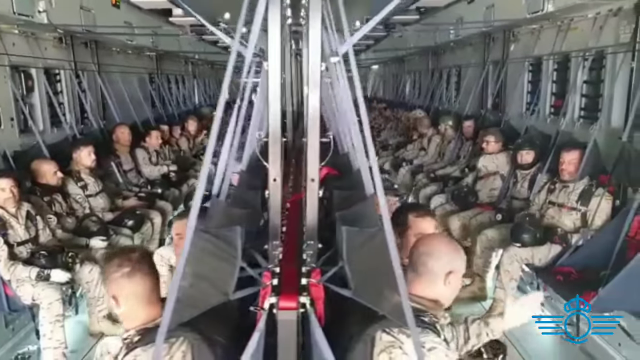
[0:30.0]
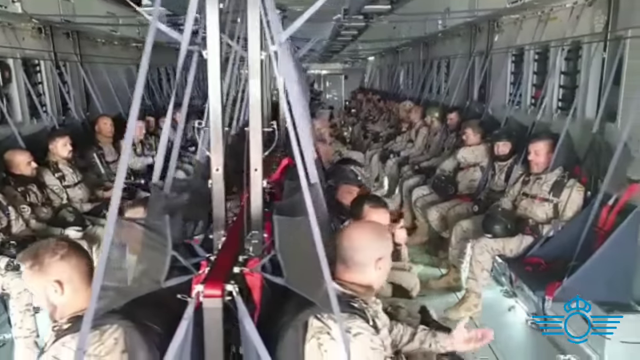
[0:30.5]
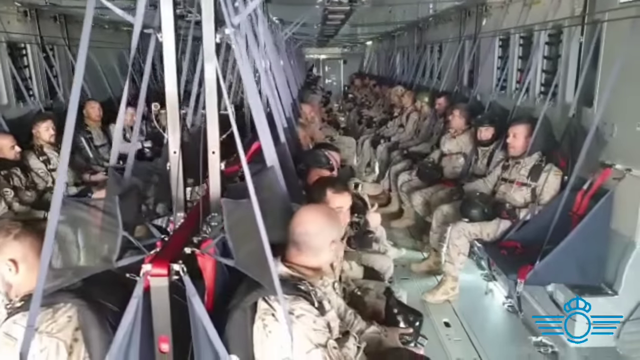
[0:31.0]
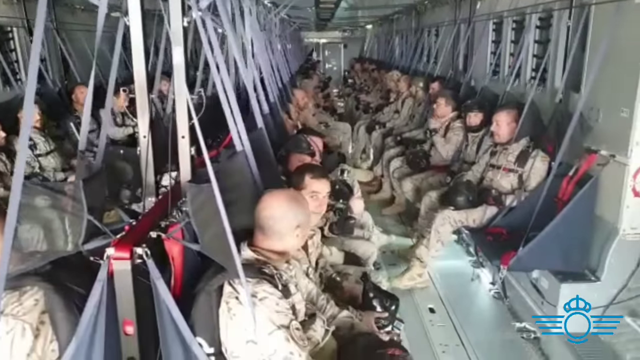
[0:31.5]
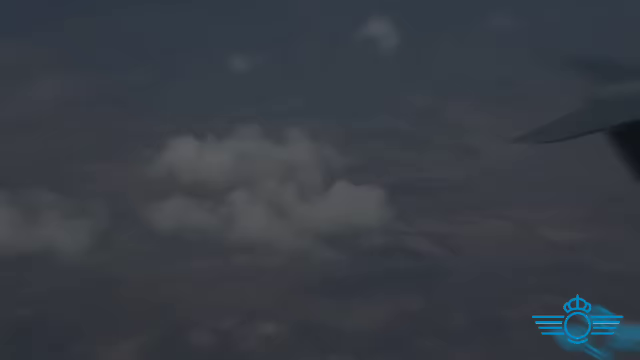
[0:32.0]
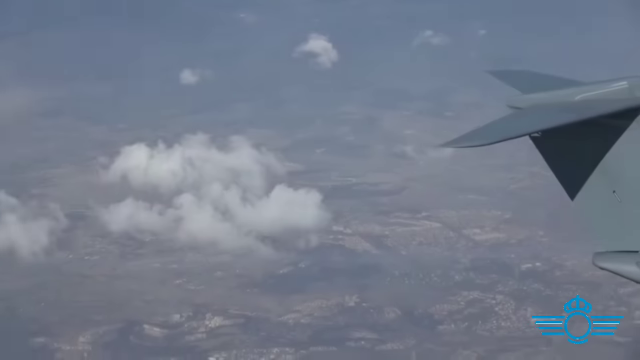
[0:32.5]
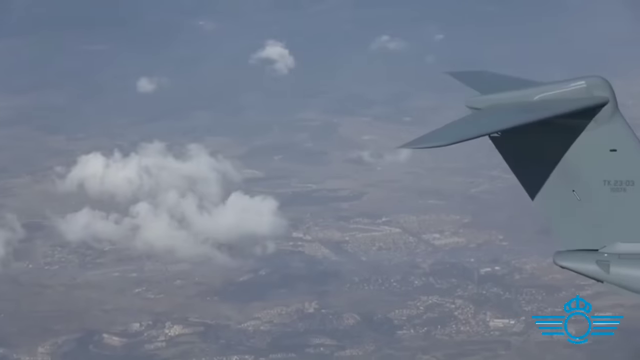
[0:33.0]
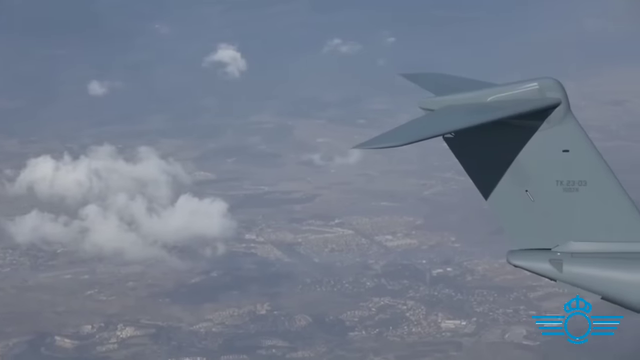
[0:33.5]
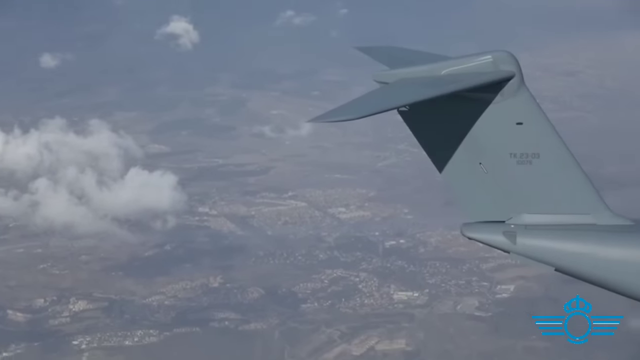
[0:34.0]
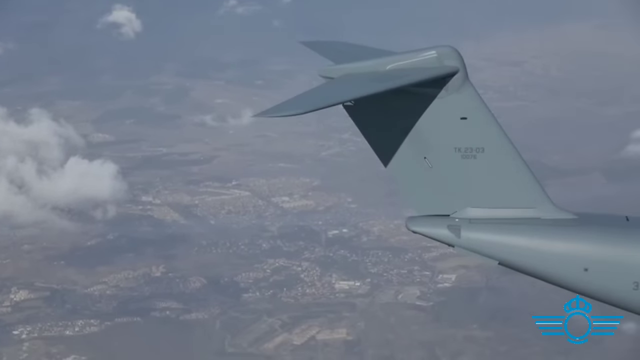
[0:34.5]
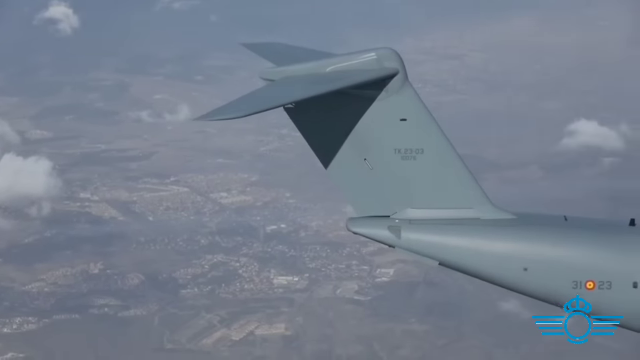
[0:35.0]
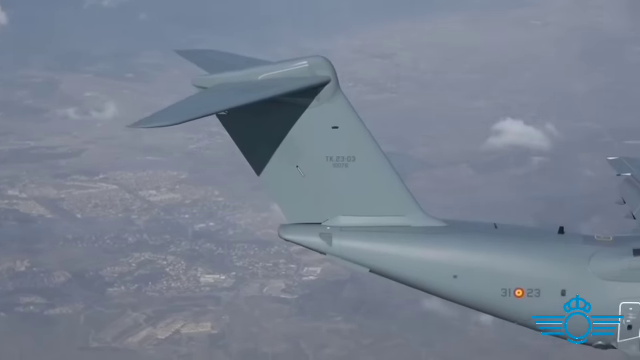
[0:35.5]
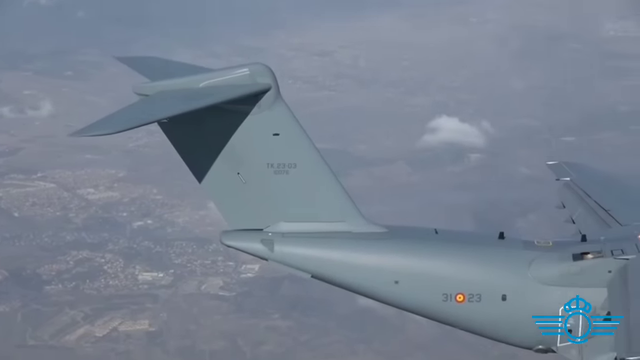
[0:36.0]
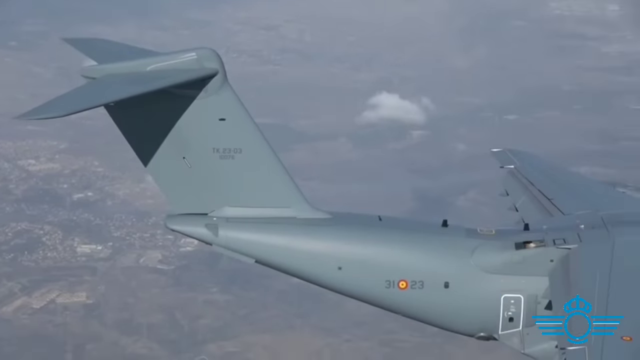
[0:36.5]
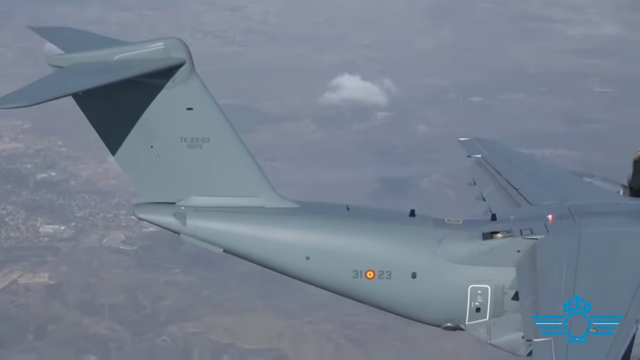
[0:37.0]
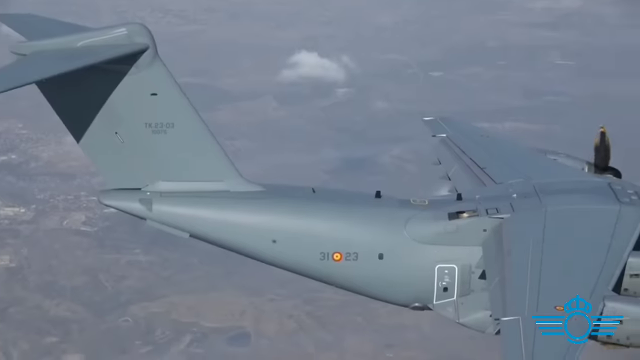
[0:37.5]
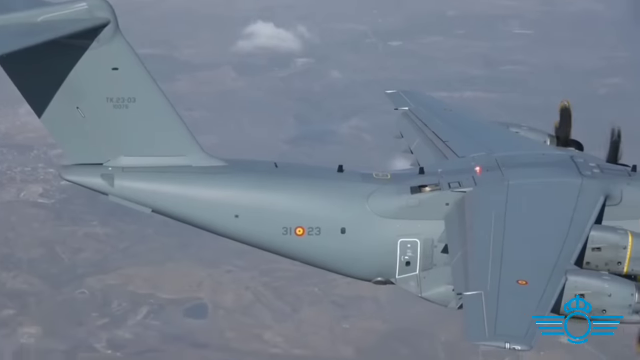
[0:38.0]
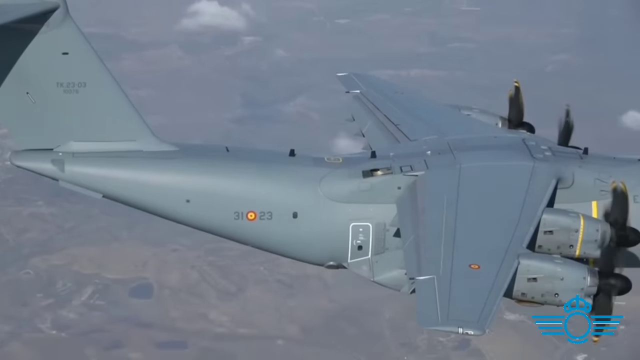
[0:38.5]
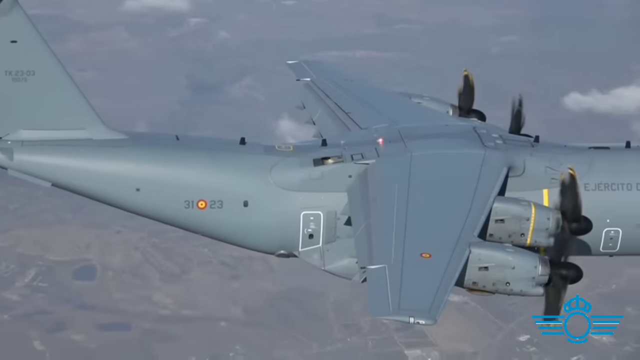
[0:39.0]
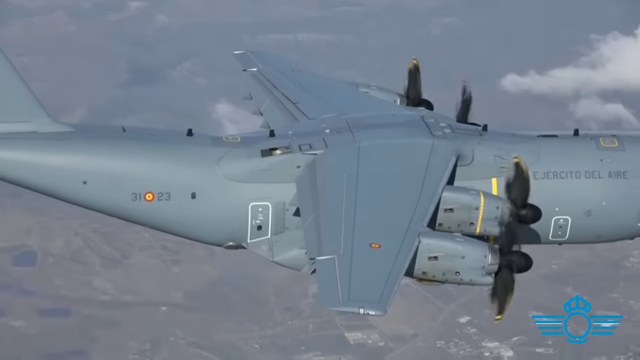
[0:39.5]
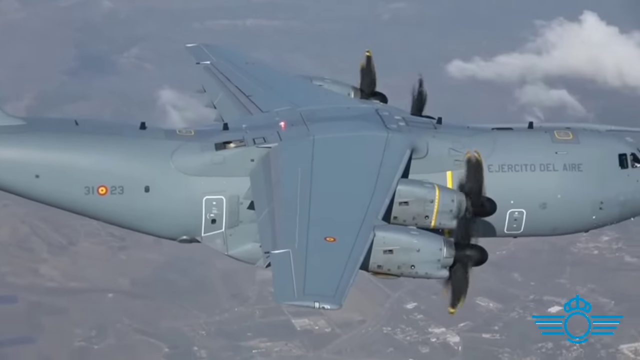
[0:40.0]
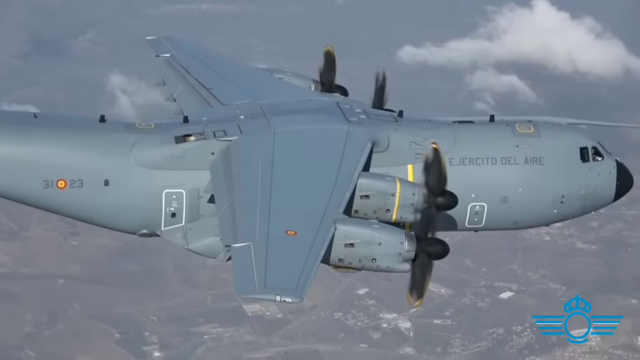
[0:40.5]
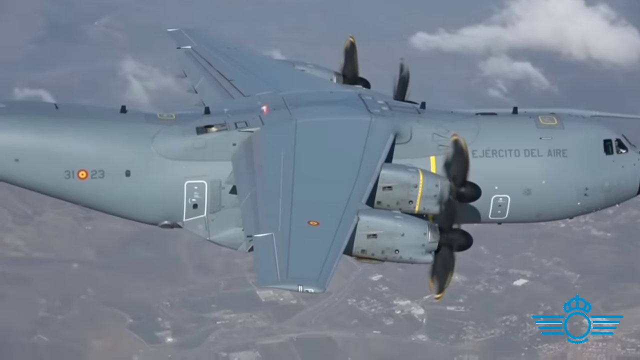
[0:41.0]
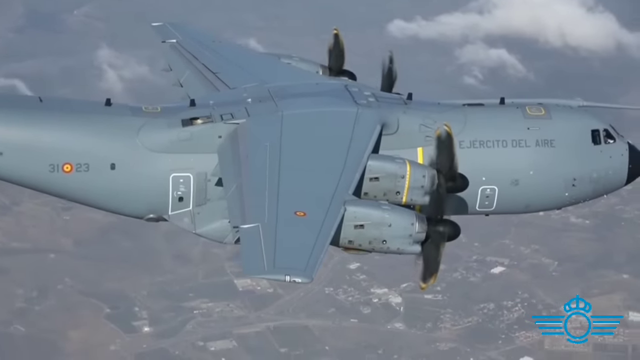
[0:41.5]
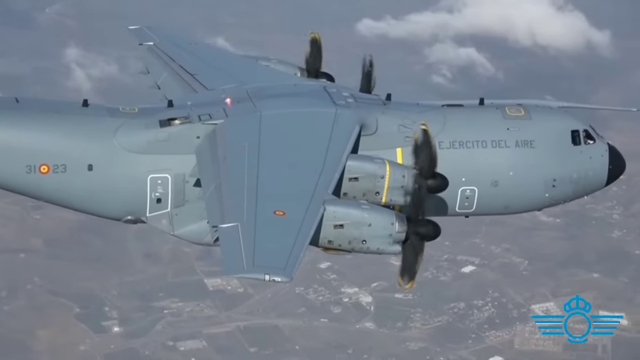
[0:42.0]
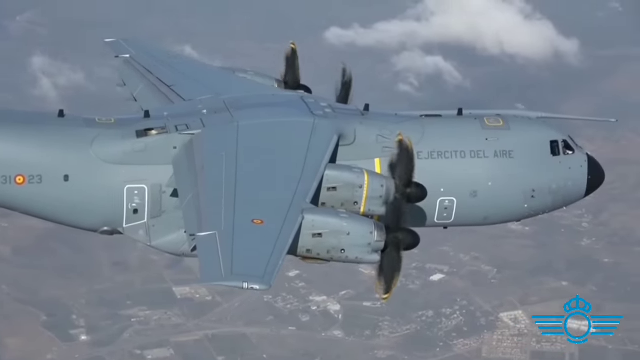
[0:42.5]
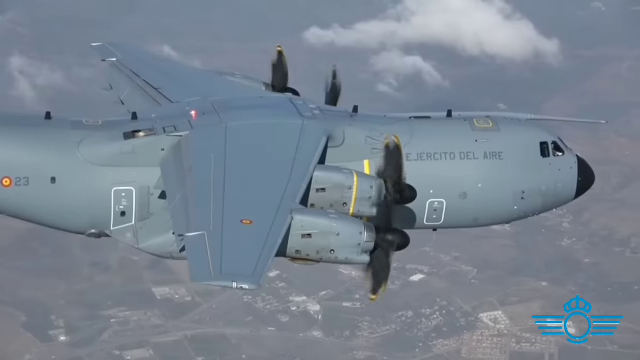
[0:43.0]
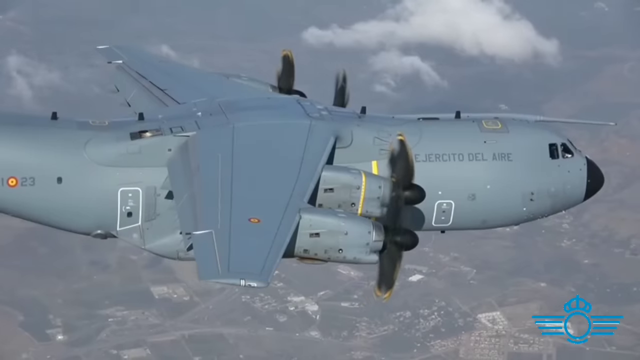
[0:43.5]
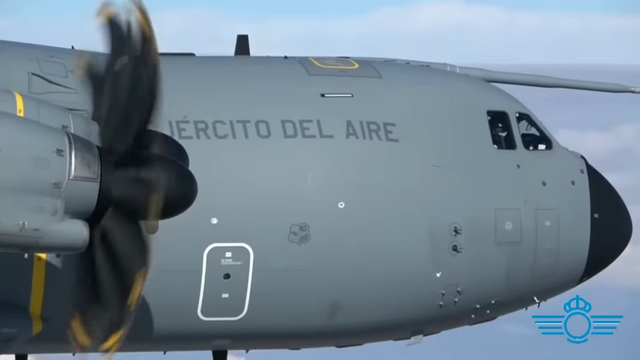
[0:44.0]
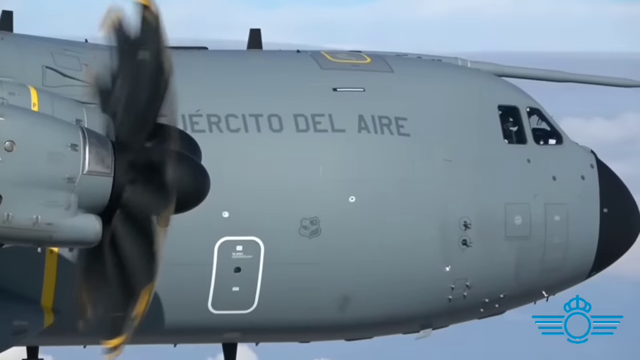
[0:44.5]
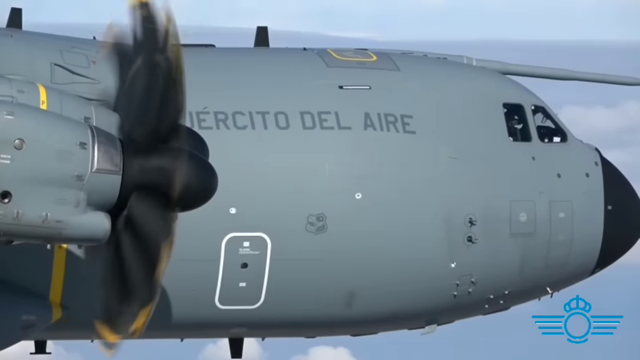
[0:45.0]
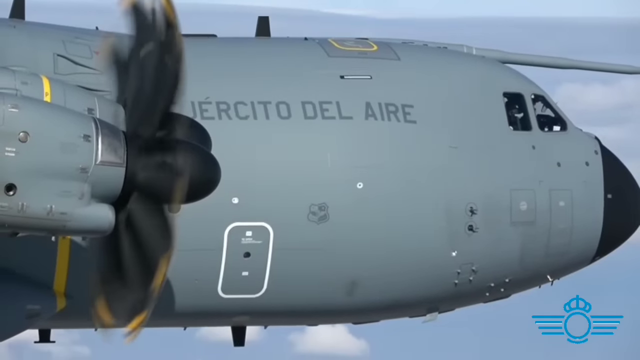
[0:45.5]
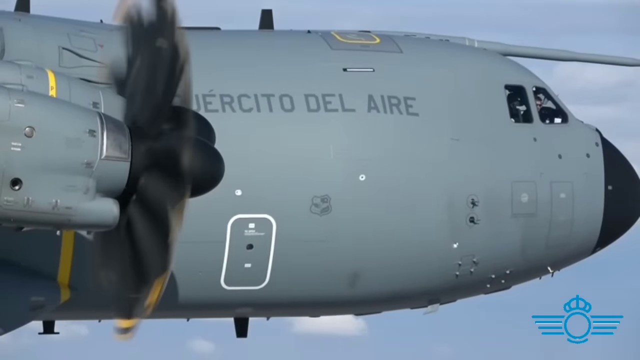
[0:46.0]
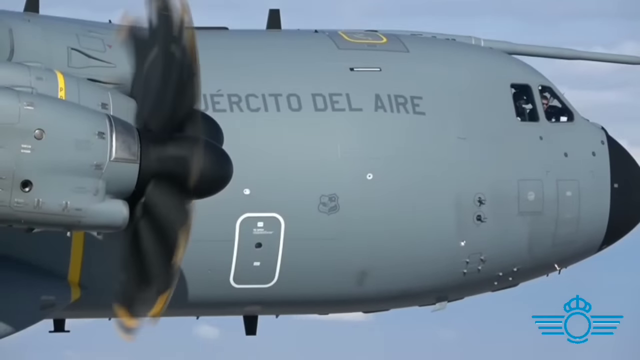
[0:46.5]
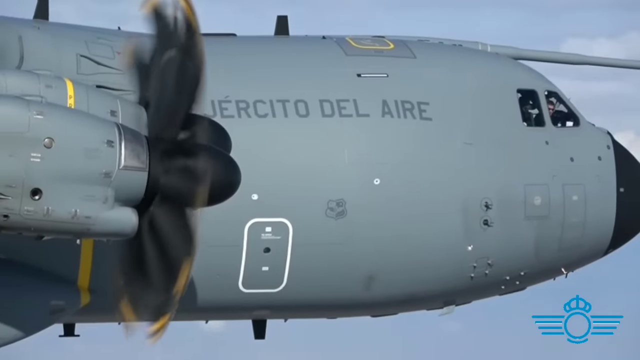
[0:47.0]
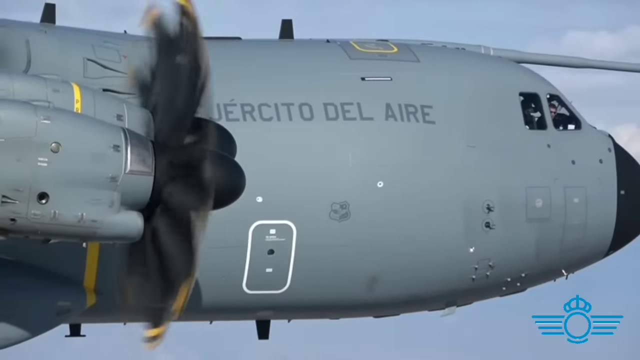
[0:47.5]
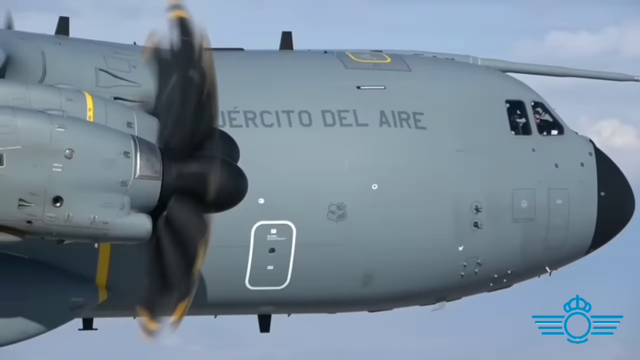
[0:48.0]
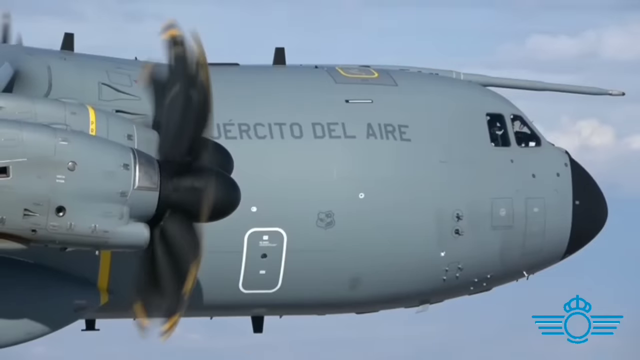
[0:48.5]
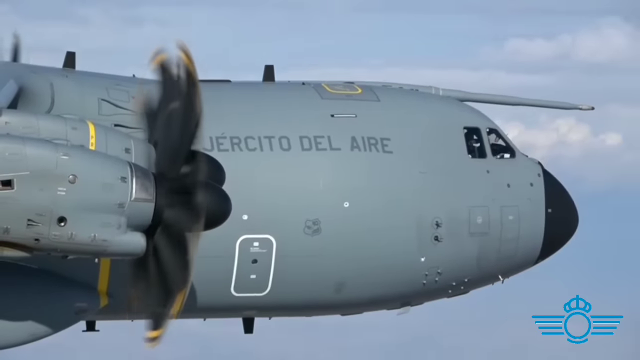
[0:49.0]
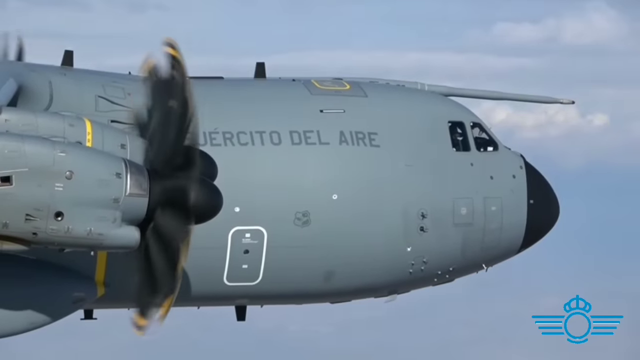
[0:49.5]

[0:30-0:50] The service people have boarded the plane, whose inside looks nothing like a traditional passenger aircraft. The seats are arranged against the walls. Along each wall is a row of service people sitting in their seats, with another row of seats across from them. The aircraft is separated by a partition in the middle; on the other side of the partition there is a row of seats on the wall of the plane, and directly across from it is another row of seats with their backs up against the partition. There are two rows of seats on each side of the aircraft, separated by the partition in the middle of the plane.